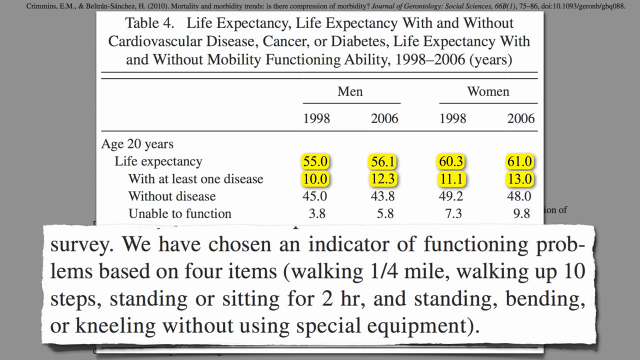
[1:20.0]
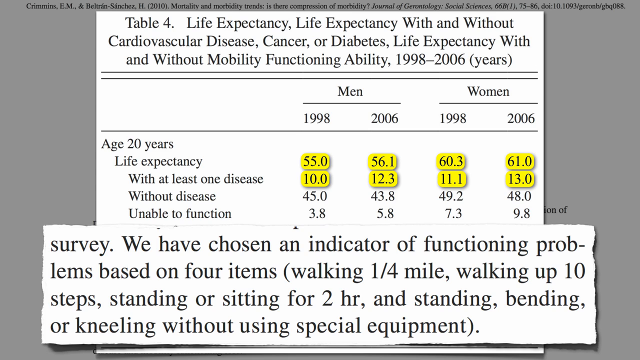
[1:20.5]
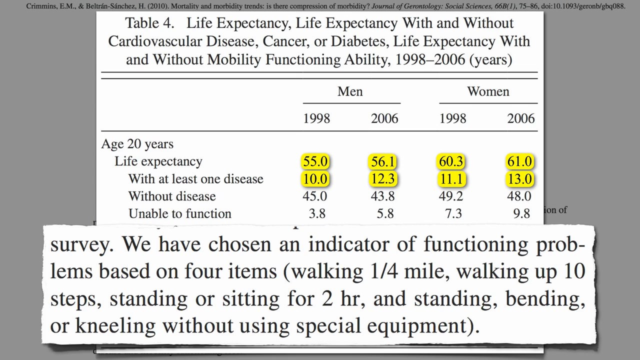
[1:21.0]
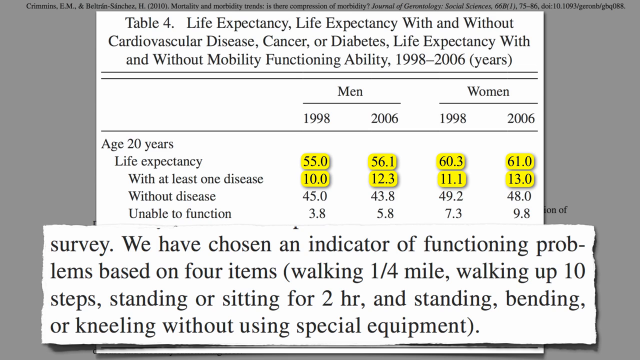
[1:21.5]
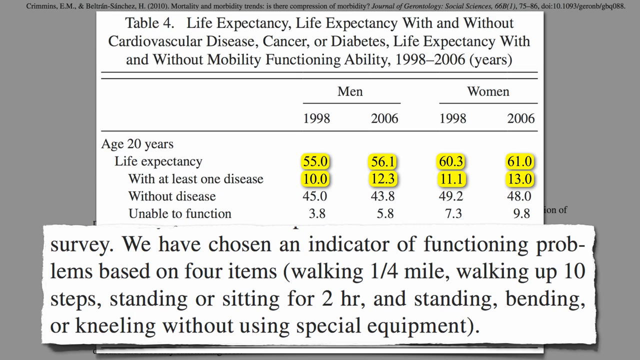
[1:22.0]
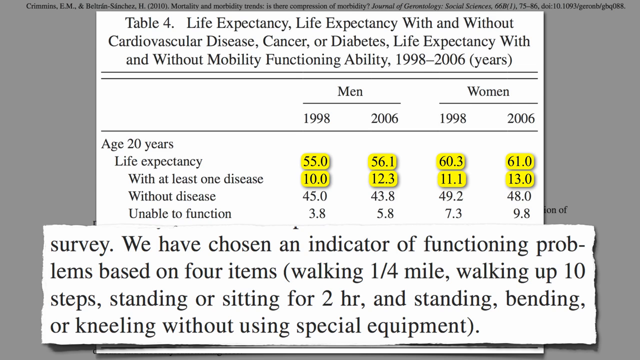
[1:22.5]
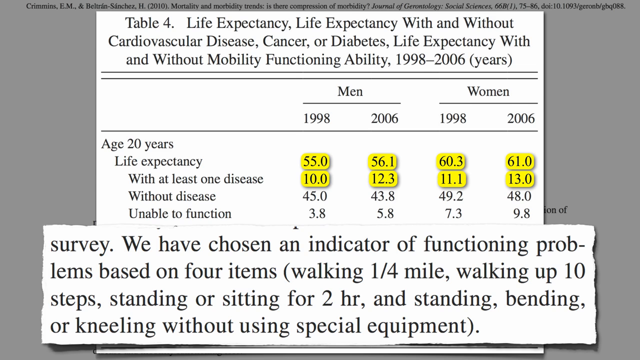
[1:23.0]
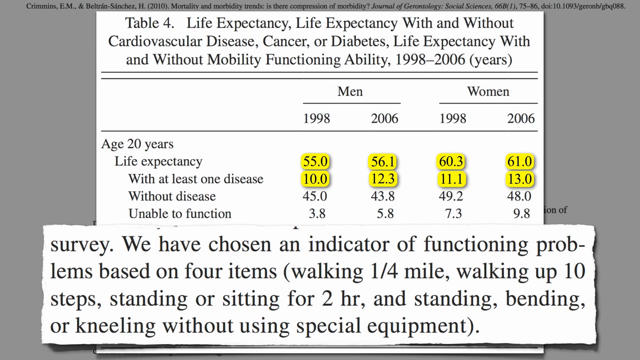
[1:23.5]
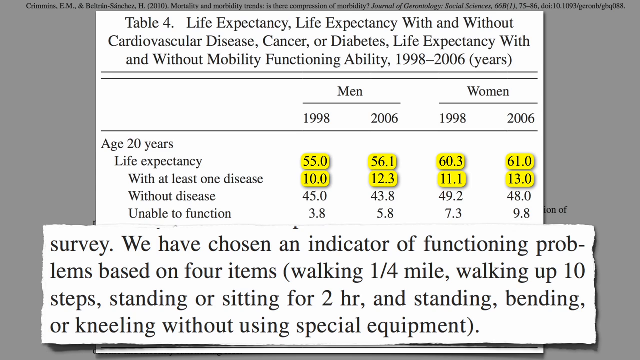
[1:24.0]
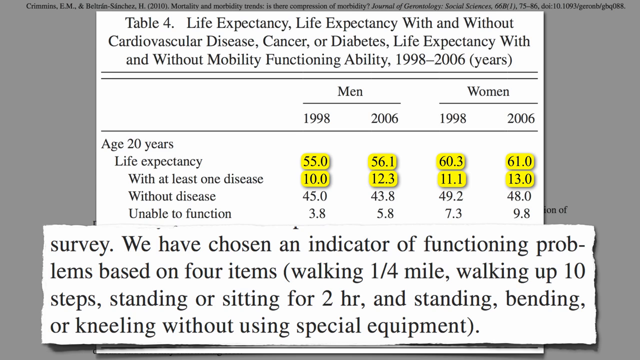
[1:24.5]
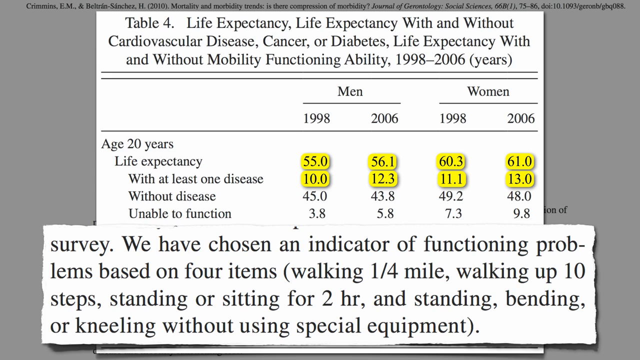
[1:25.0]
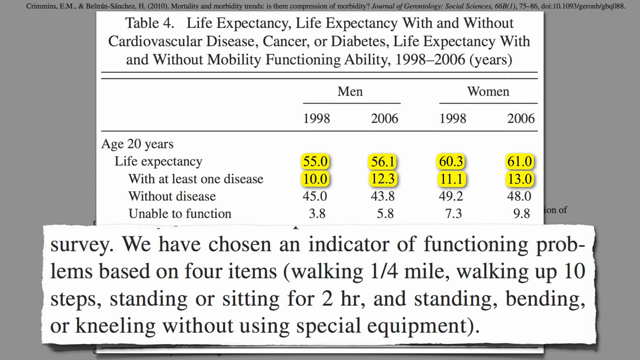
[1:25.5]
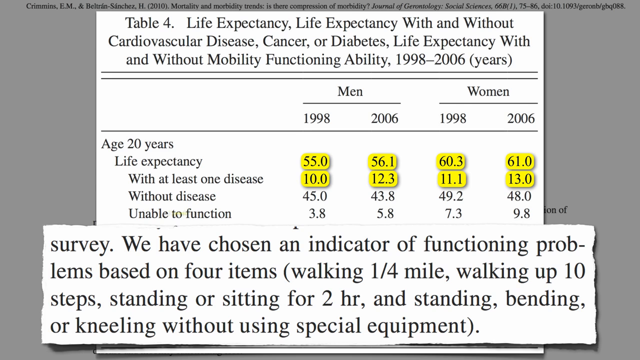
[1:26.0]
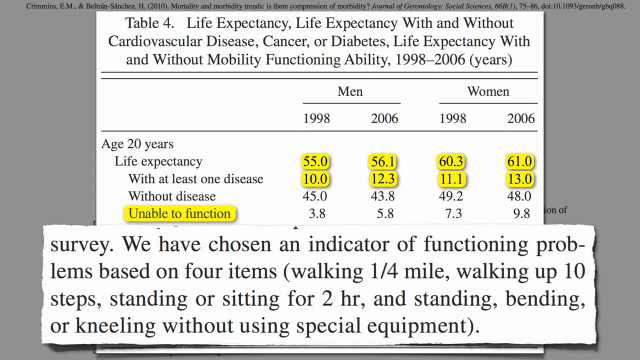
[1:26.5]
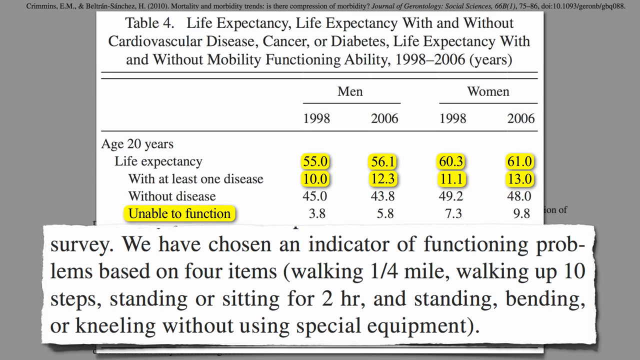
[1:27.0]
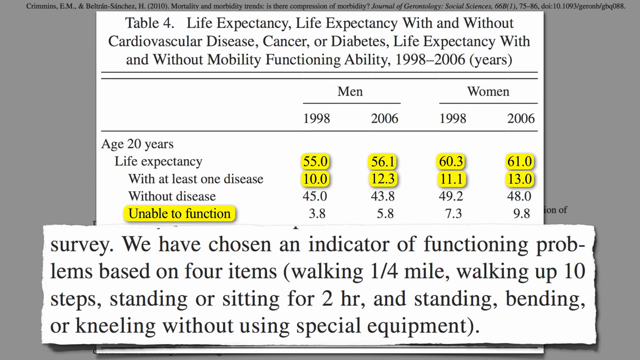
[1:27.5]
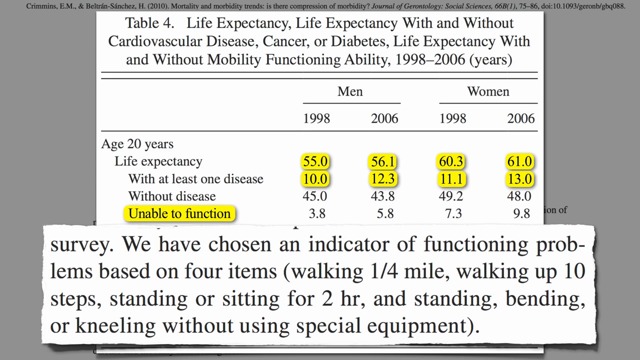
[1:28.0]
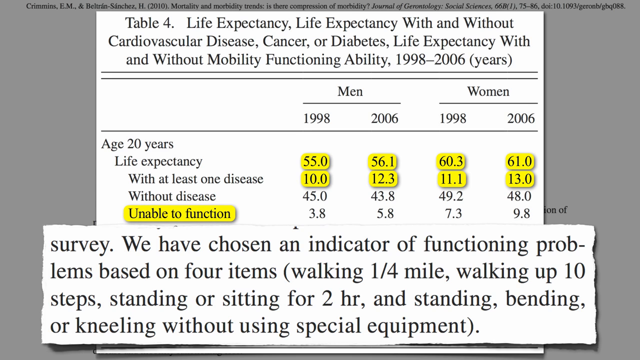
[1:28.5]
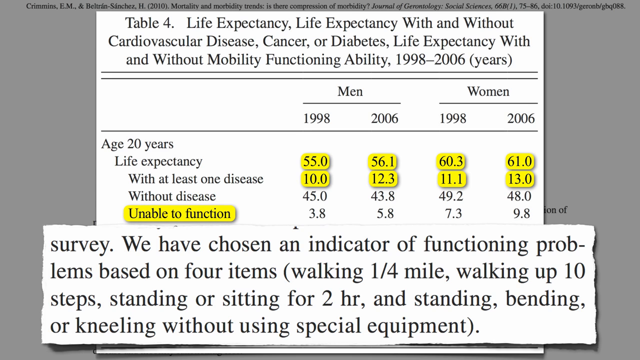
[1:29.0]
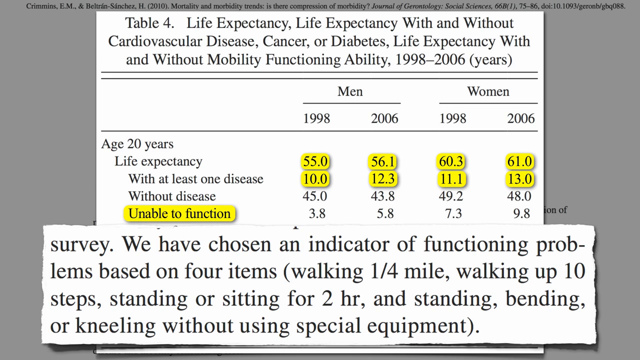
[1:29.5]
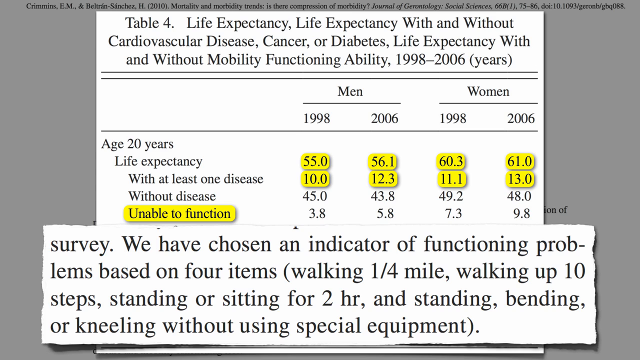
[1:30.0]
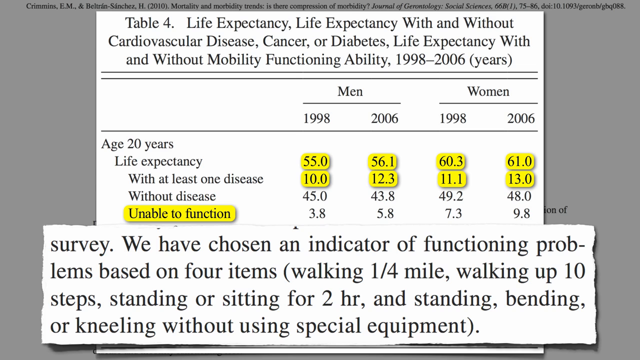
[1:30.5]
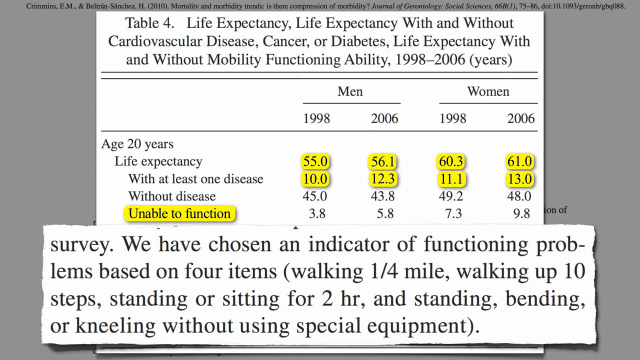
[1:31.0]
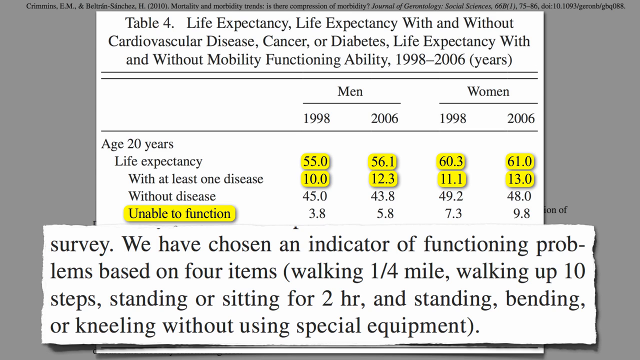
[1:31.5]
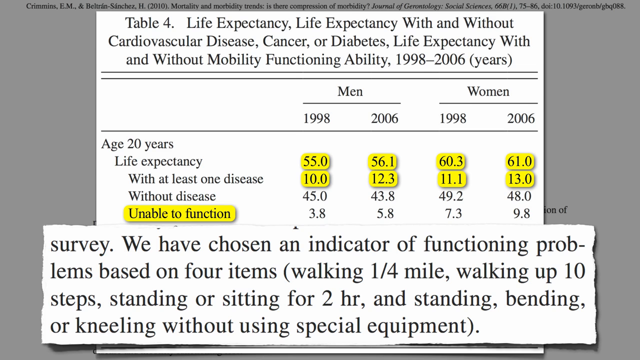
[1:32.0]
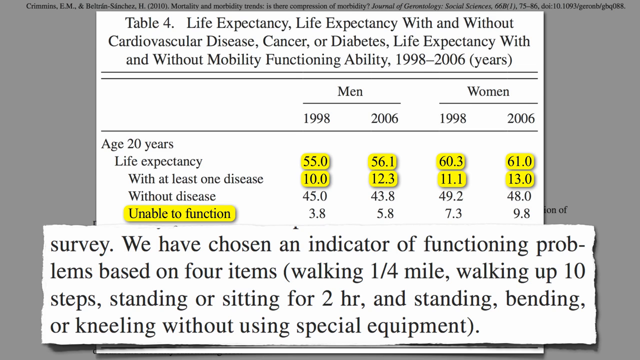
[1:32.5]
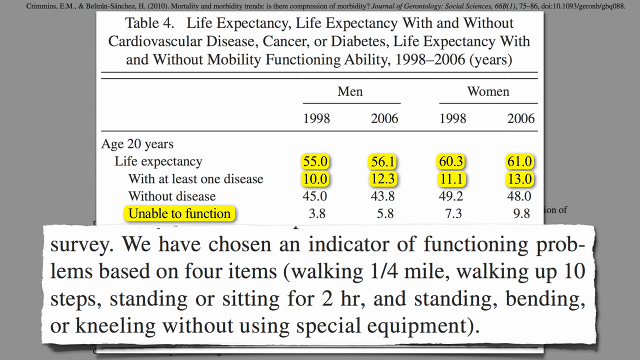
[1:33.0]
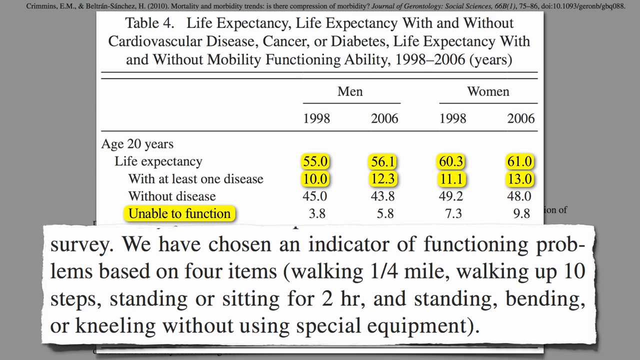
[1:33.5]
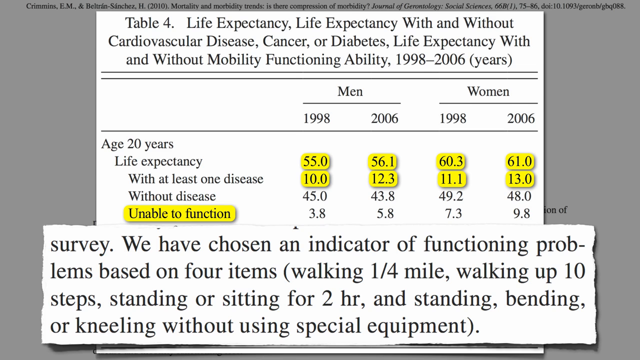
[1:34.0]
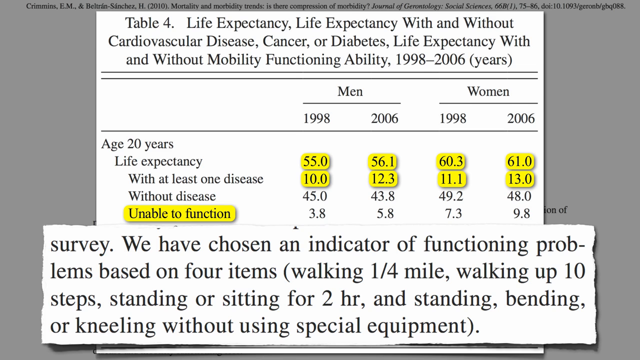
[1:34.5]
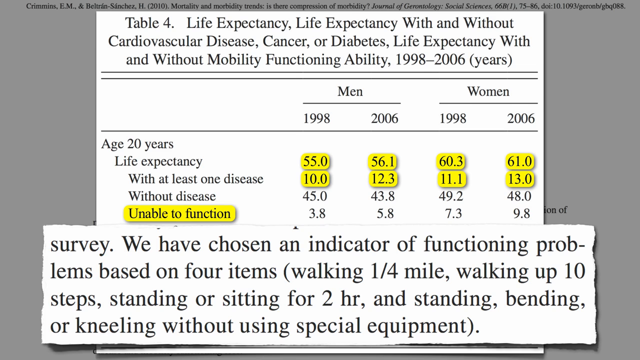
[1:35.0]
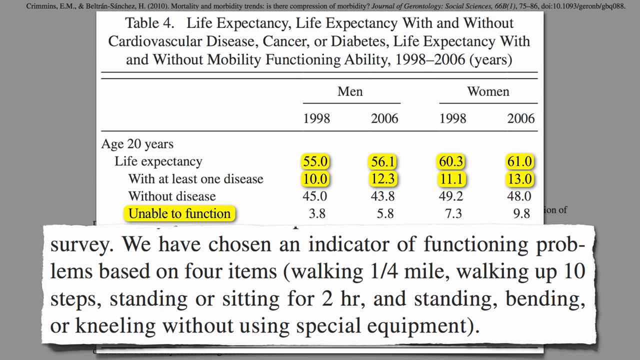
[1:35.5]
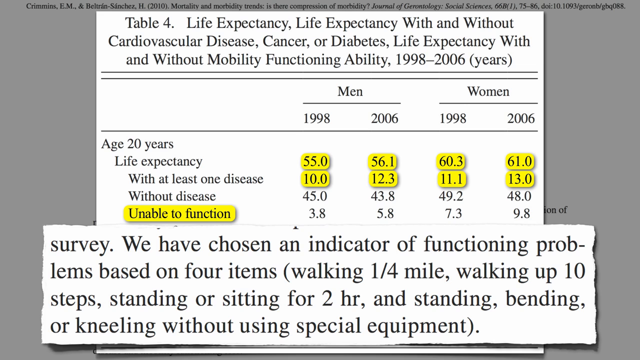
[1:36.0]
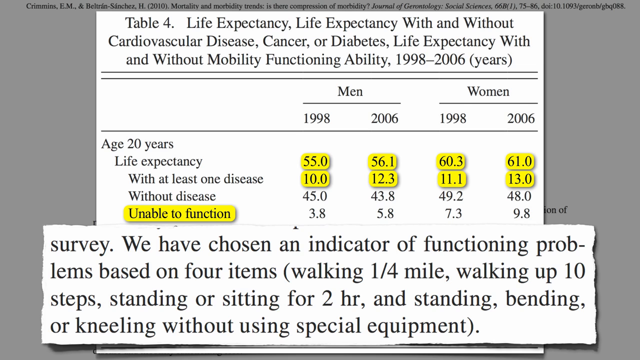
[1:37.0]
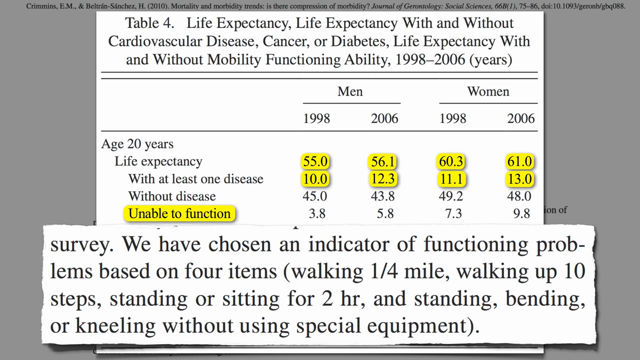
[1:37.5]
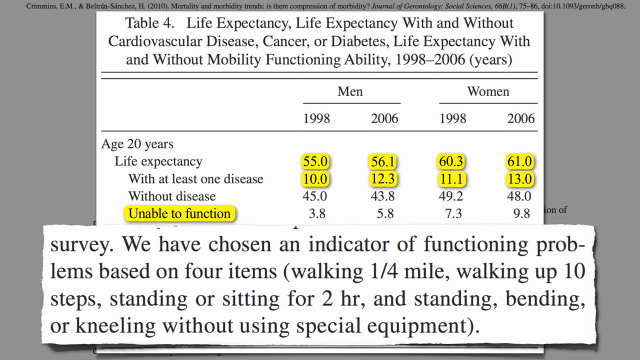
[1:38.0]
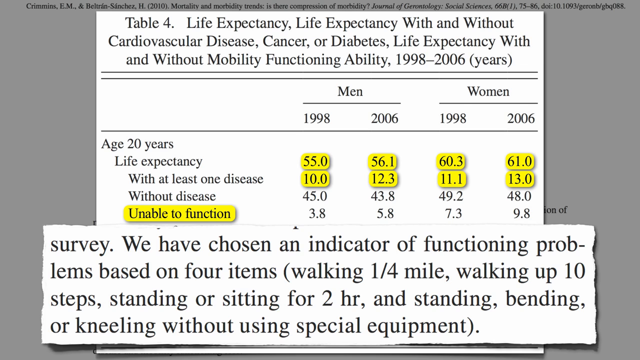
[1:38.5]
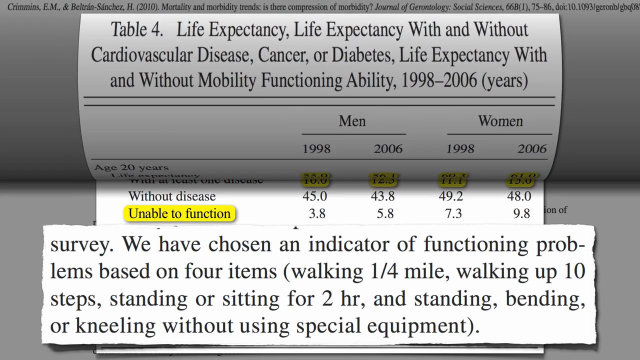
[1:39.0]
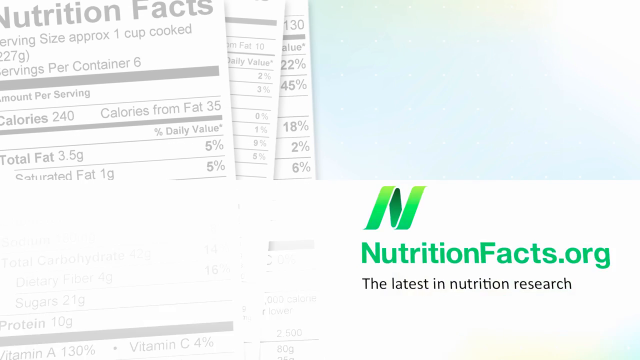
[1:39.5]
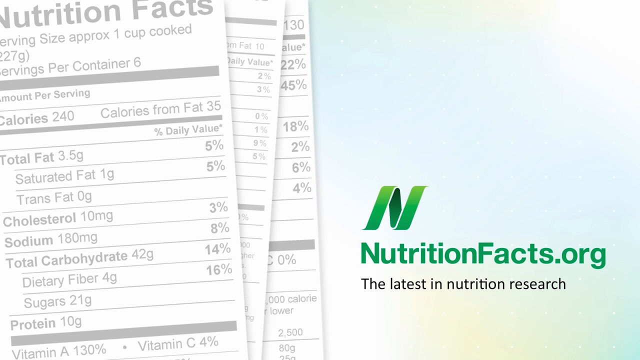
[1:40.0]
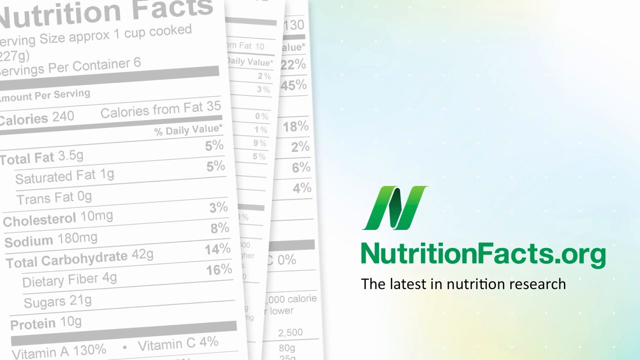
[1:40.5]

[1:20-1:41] The snippet about indicators of functioning problems continues to be shown. Then another row in the table is highlighted, this time only the row's name, "unable to function," the fourth row under the age 20 years category. Its figures appear very low: for men, 3.8 in 1998 and 5.8 in 2006; for women, 7.3 in 1988 and 9.8 in 2006. At the end, the video goes back to the very first title screen.